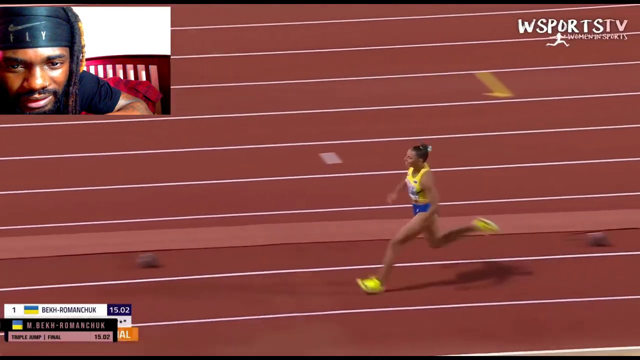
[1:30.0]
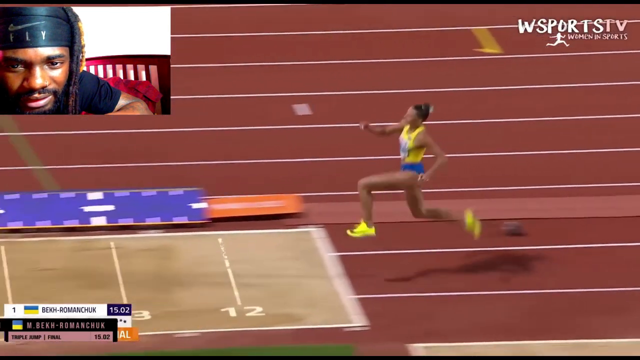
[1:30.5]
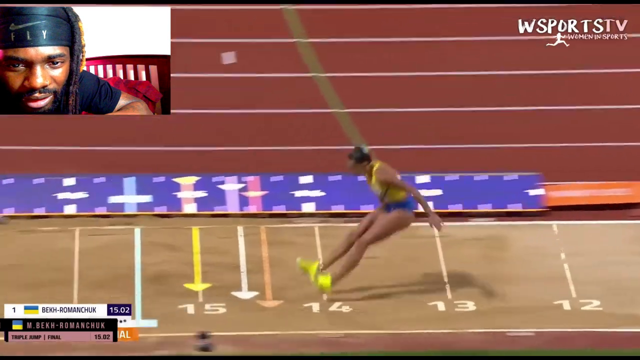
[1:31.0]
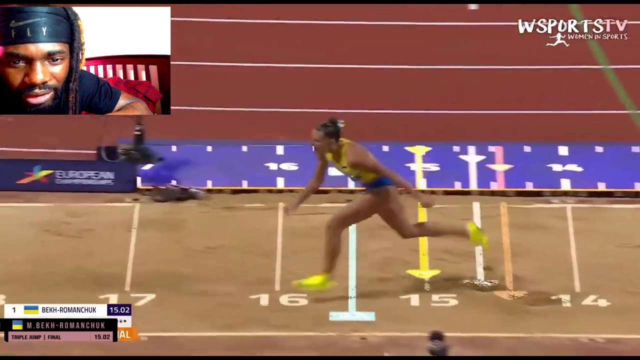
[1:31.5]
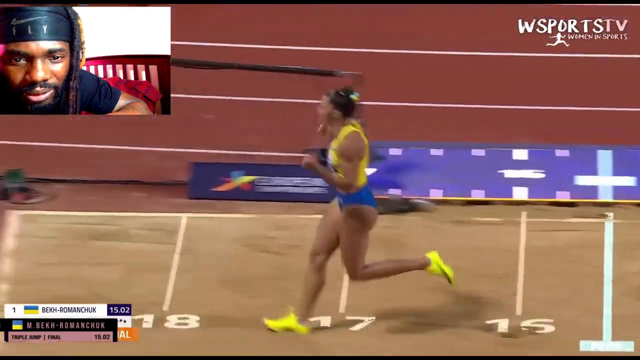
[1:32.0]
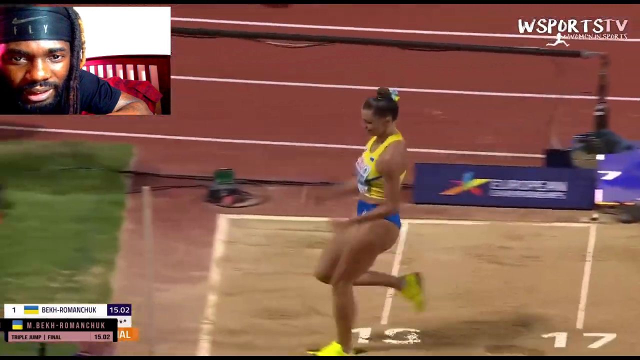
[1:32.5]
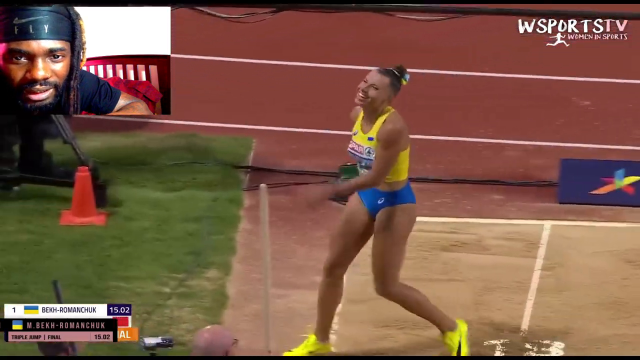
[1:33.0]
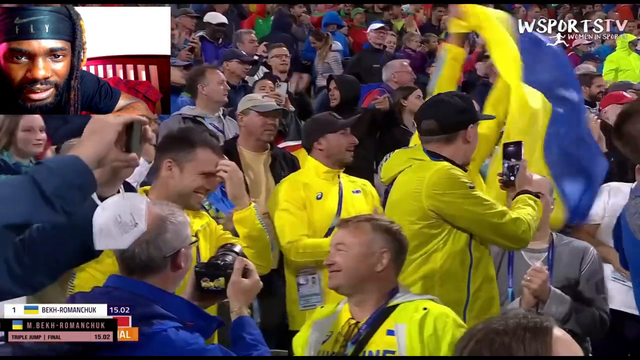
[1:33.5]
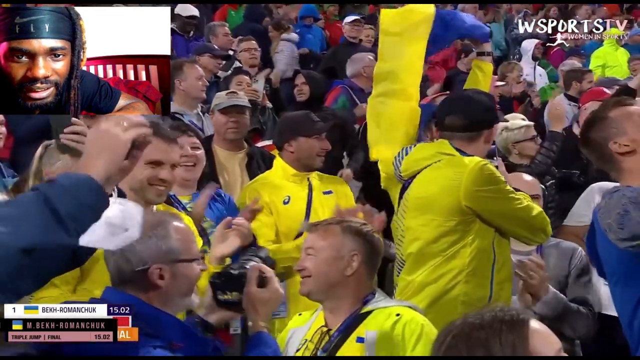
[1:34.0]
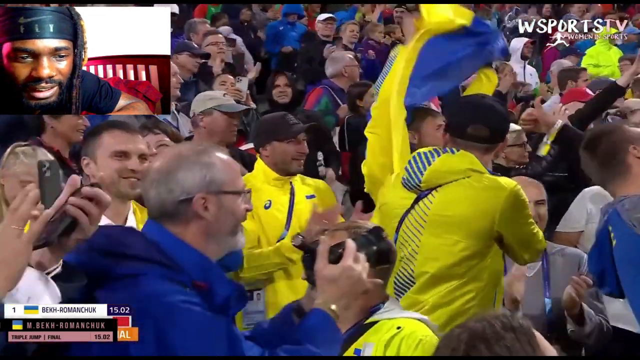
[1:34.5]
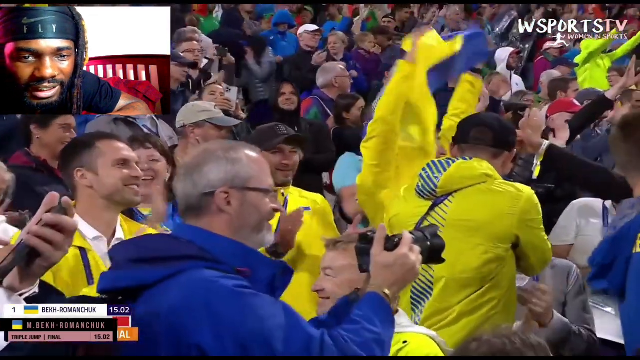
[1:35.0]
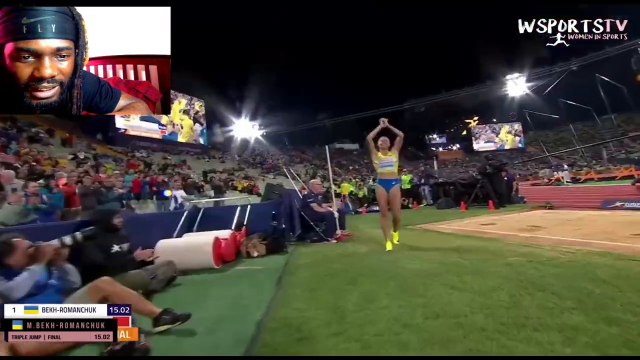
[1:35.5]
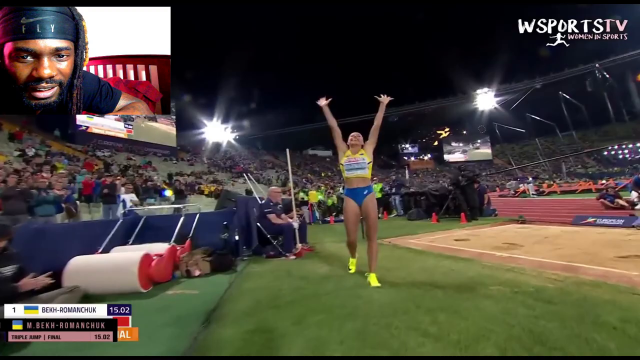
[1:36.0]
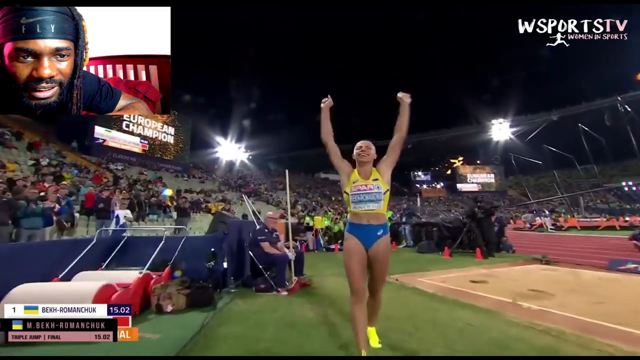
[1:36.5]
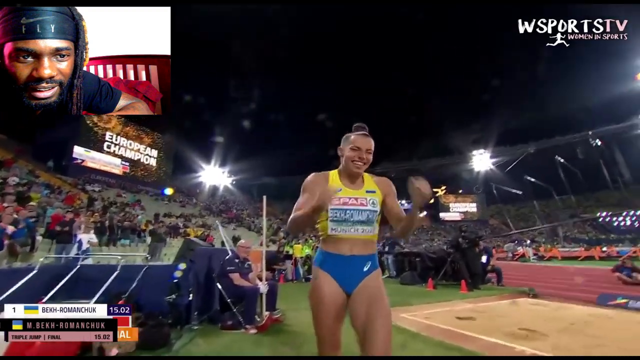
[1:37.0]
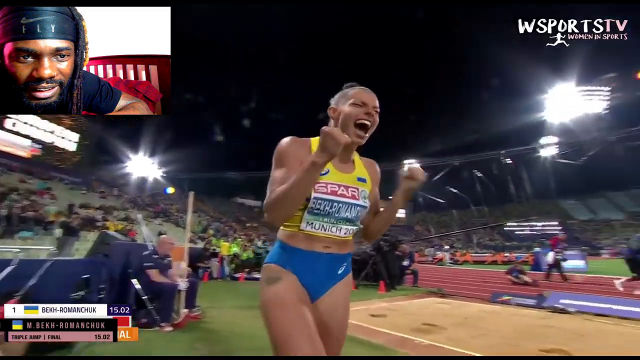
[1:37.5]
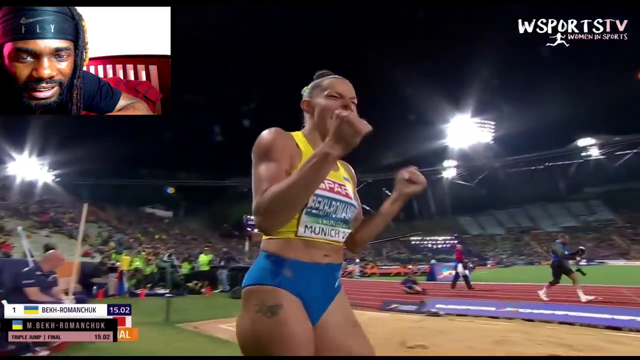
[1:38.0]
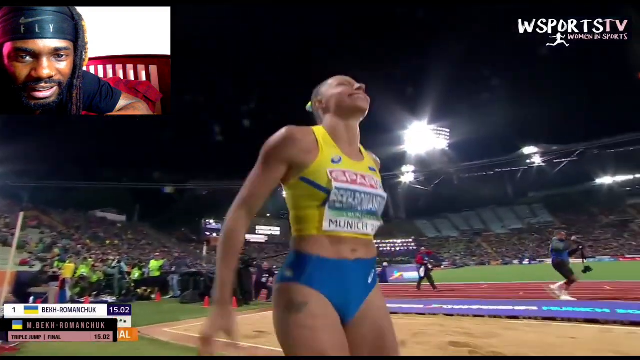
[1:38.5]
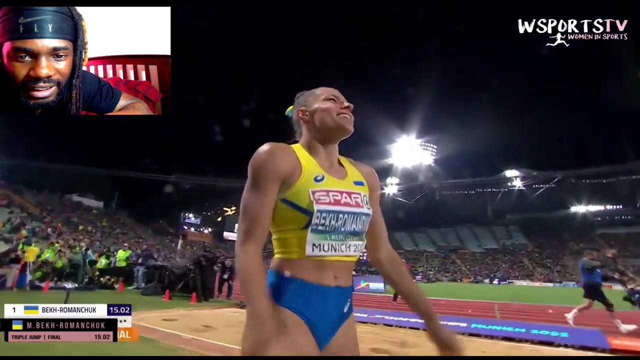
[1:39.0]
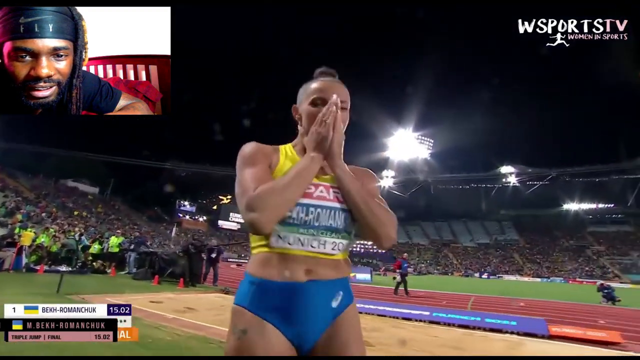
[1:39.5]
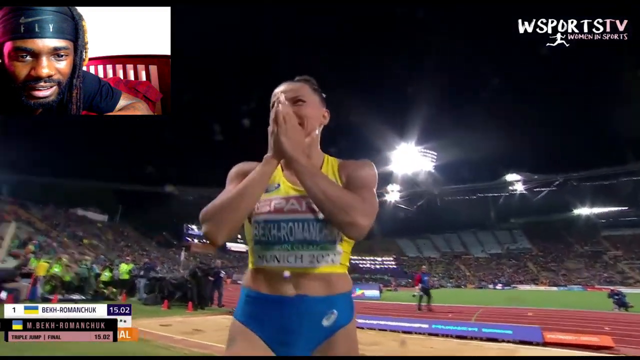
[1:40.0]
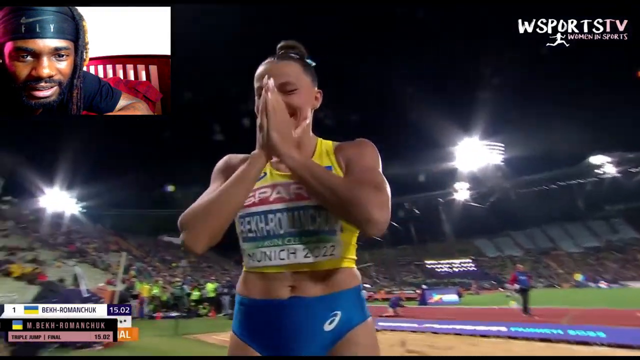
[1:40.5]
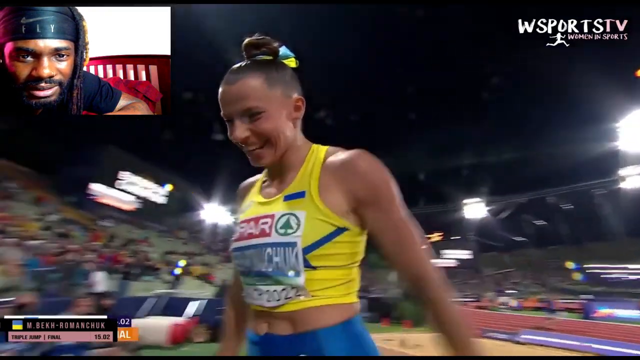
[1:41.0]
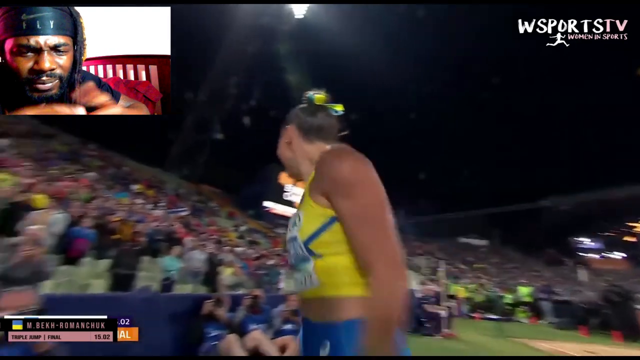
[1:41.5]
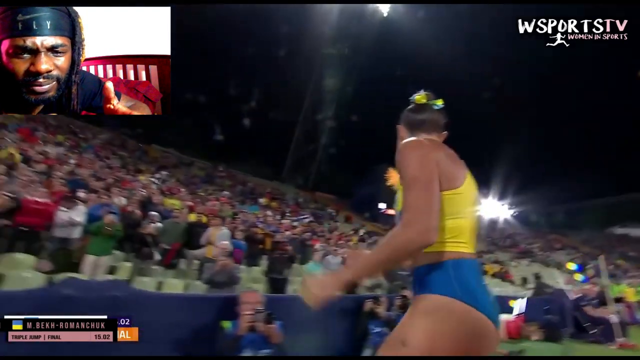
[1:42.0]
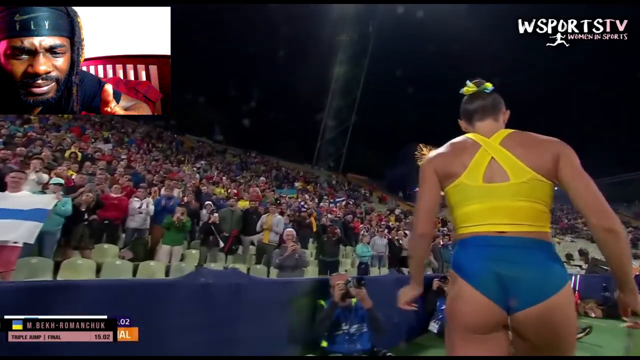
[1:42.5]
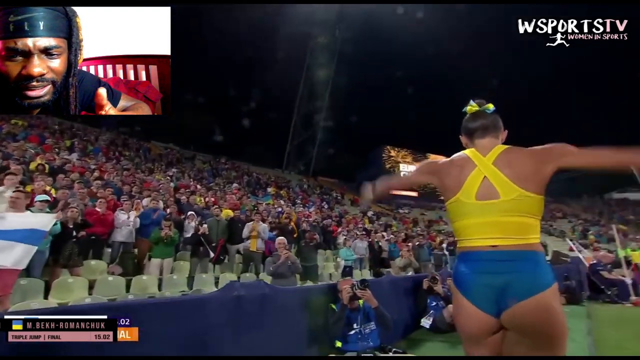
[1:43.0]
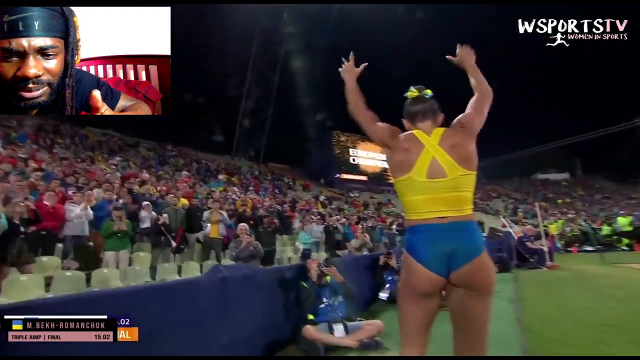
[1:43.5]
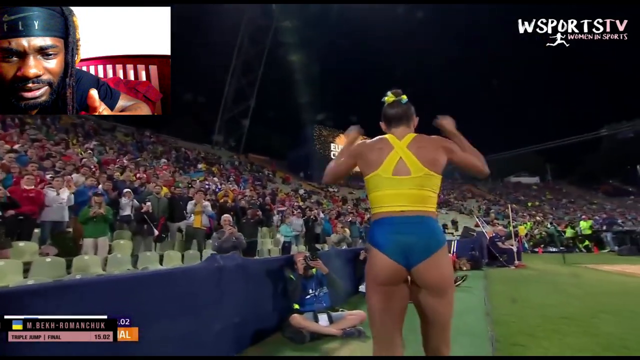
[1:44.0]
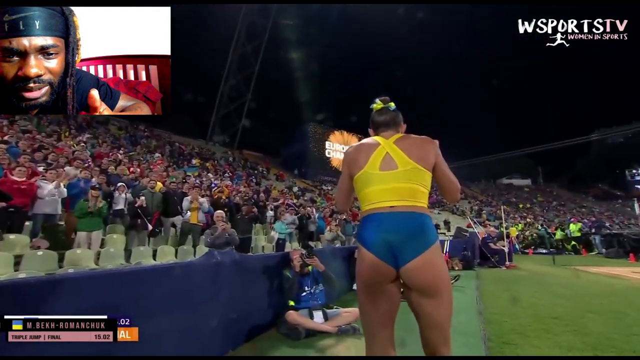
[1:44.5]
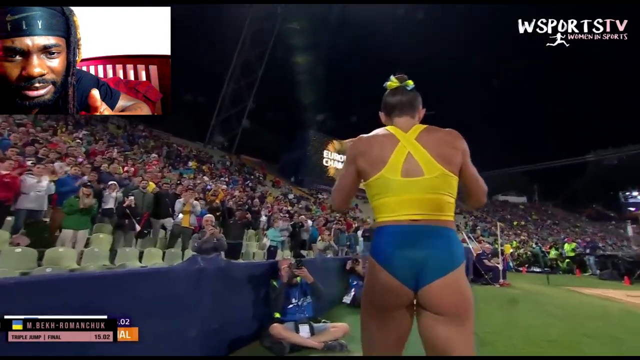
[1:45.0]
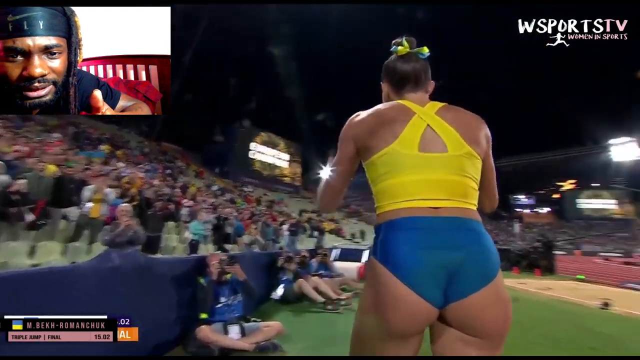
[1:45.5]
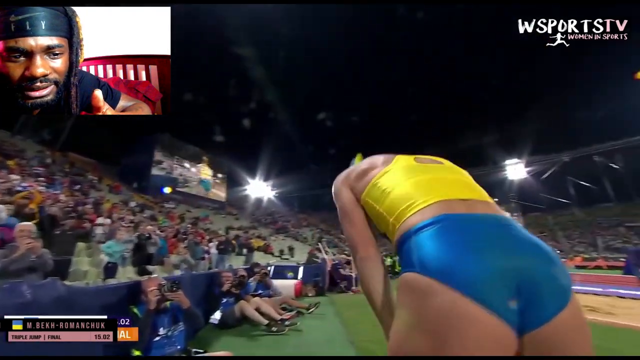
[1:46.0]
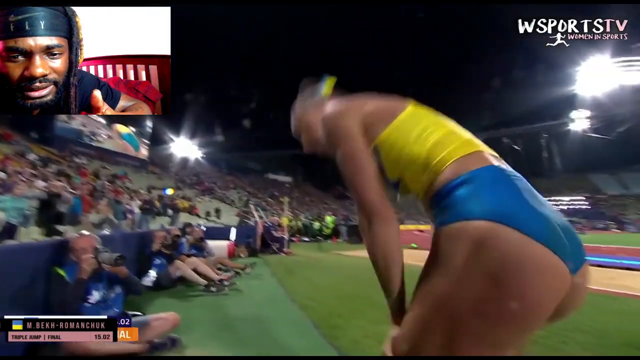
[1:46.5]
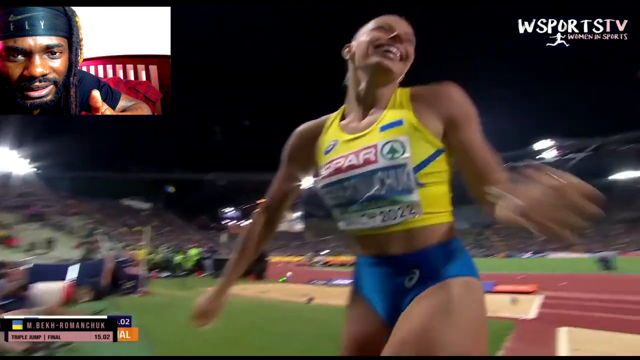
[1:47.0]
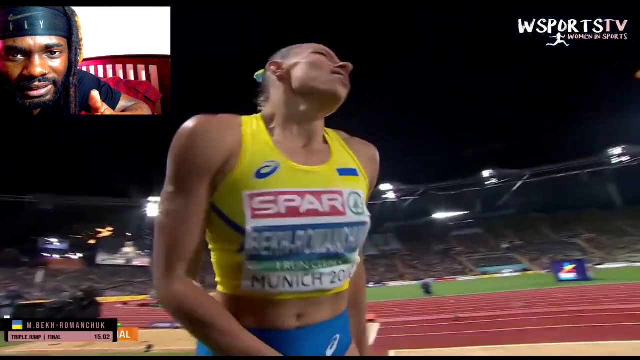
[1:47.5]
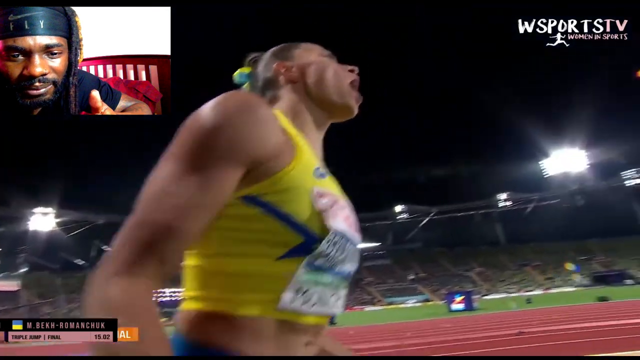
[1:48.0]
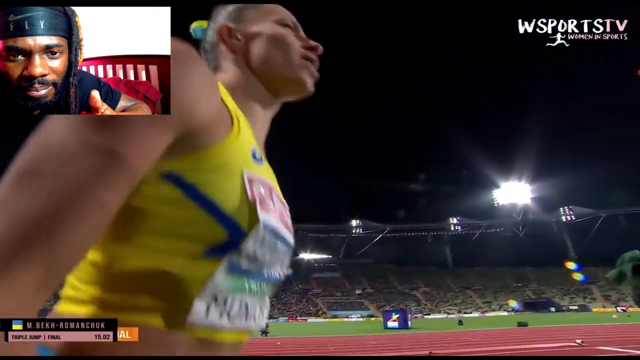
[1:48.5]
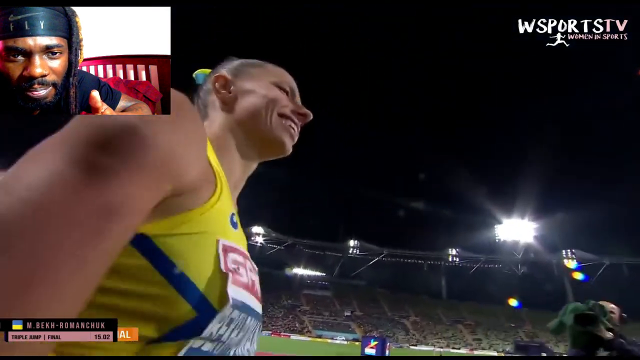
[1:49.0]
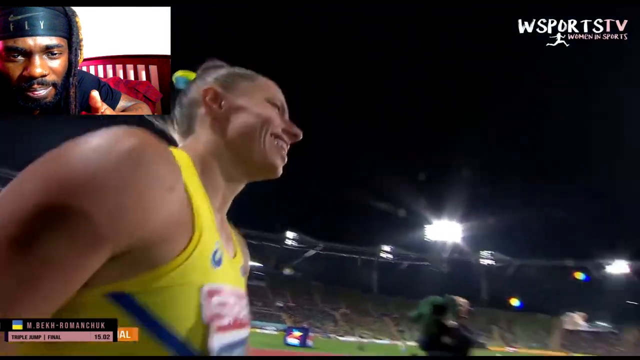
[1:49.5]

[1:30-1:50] She jumps into the sand; the jump appears not as good as her previous one but about as close. She lands without slipping and walks right off. She seems very satisfied and happy, probably having gotten first place. She pumps her fists, bows down, and cheers herself on with a big smile, seeming very tired and very happy at the same time. The man in the top left corner looks very confused.